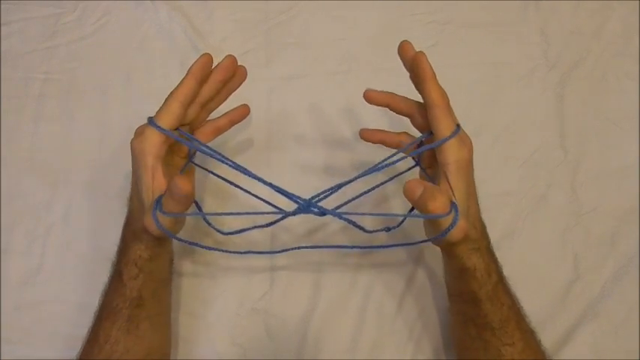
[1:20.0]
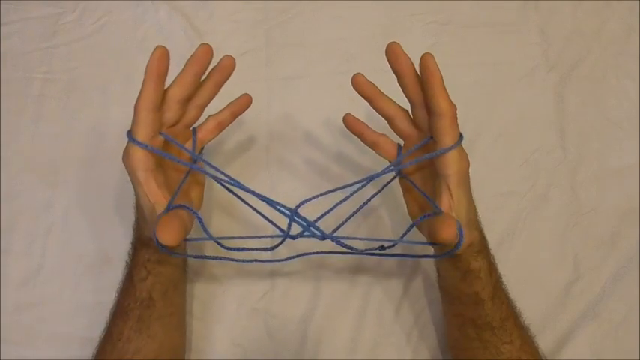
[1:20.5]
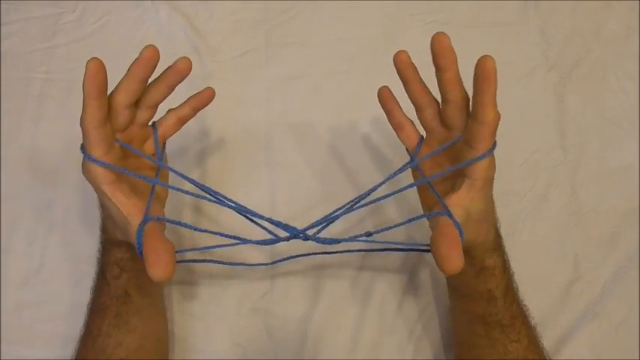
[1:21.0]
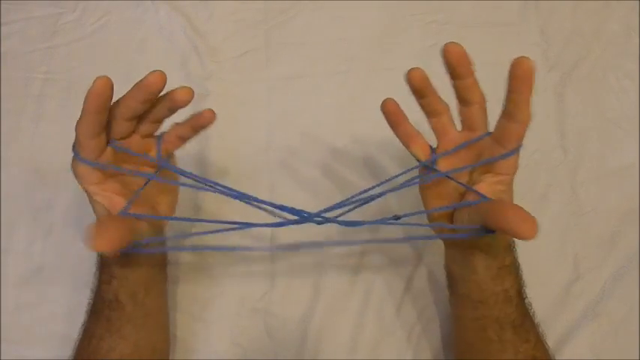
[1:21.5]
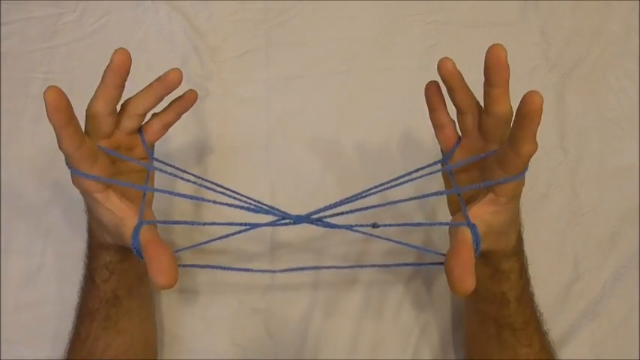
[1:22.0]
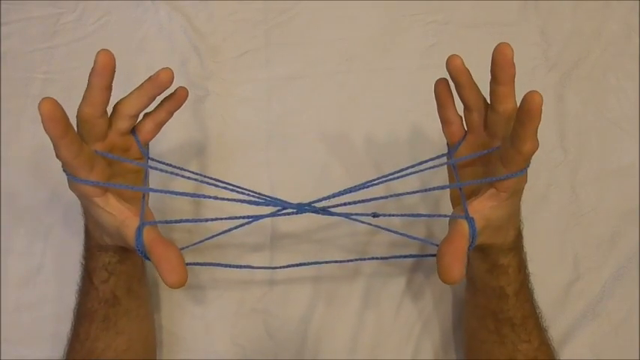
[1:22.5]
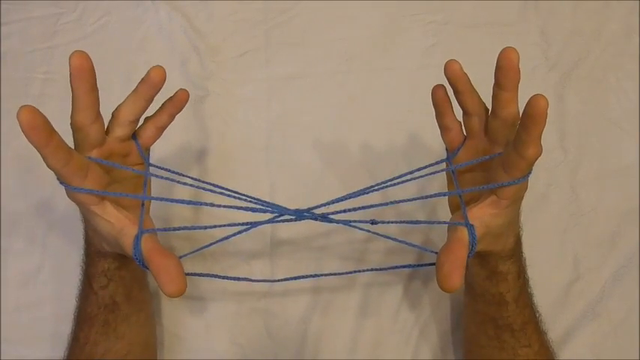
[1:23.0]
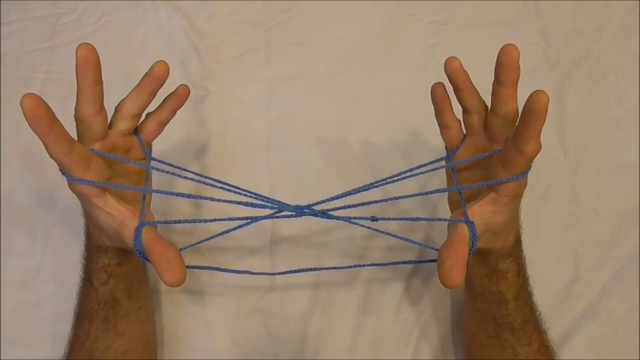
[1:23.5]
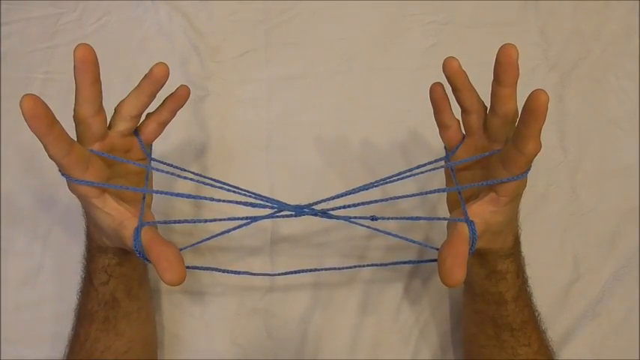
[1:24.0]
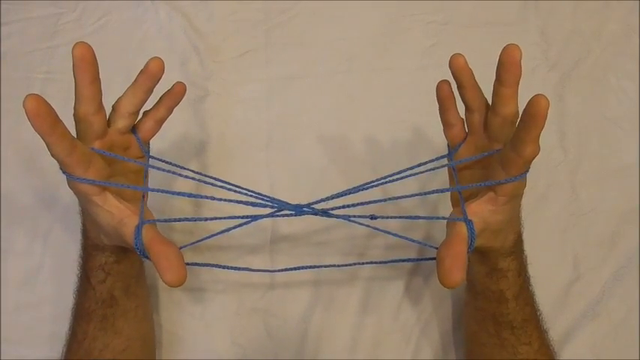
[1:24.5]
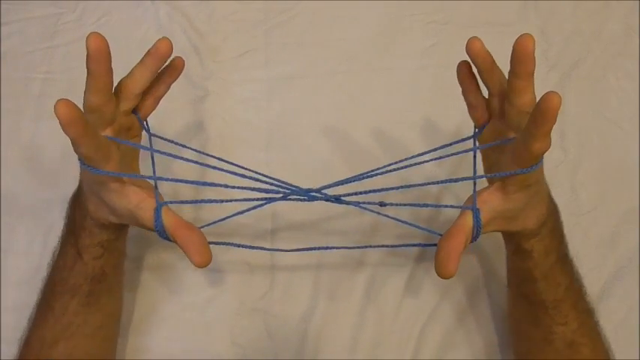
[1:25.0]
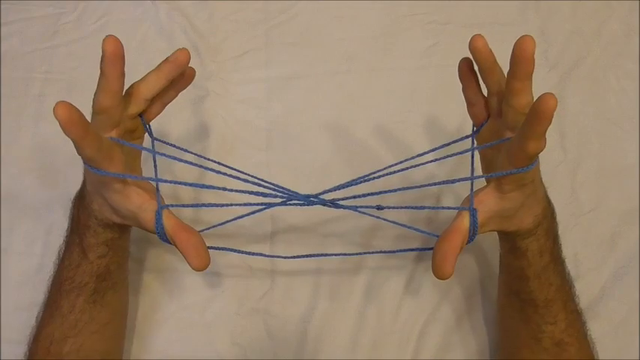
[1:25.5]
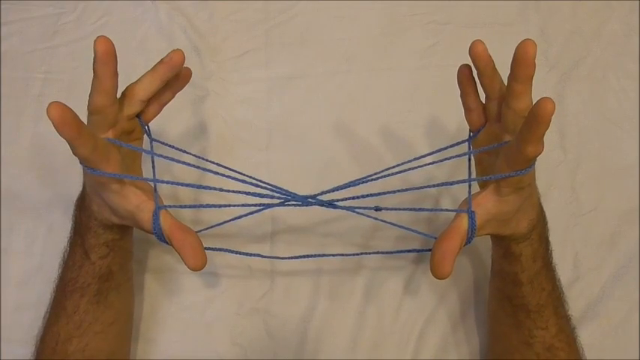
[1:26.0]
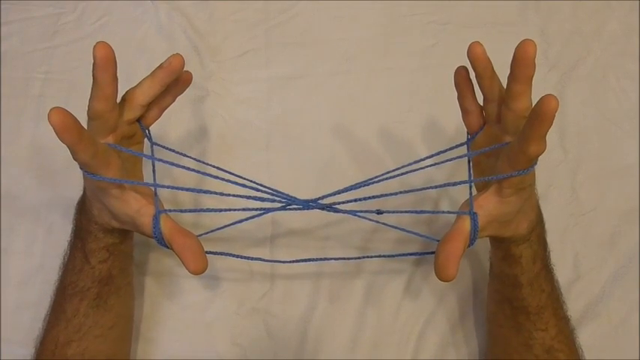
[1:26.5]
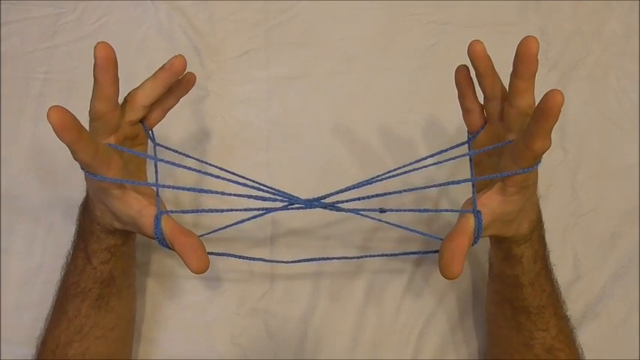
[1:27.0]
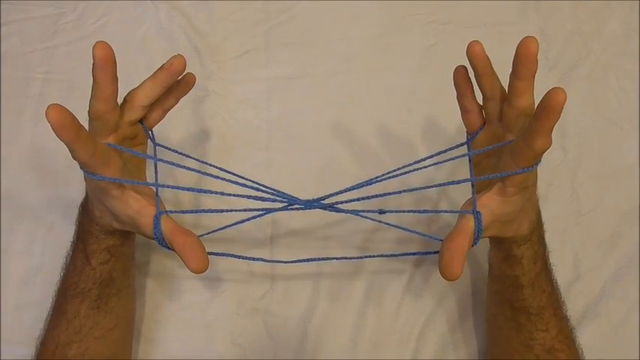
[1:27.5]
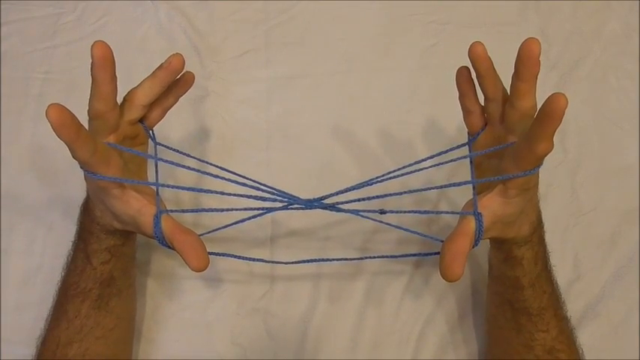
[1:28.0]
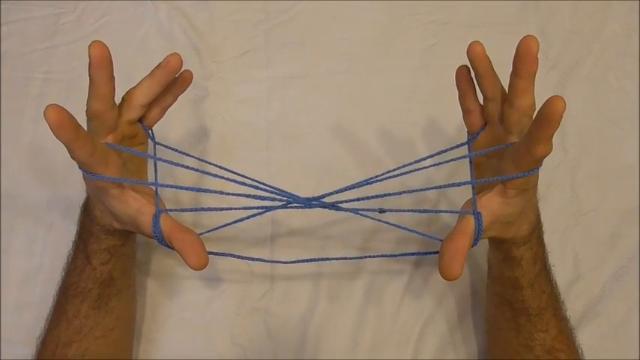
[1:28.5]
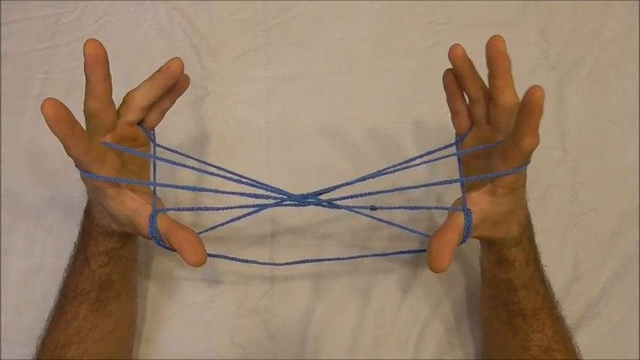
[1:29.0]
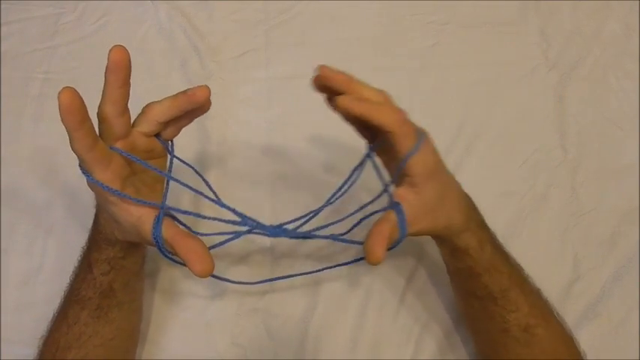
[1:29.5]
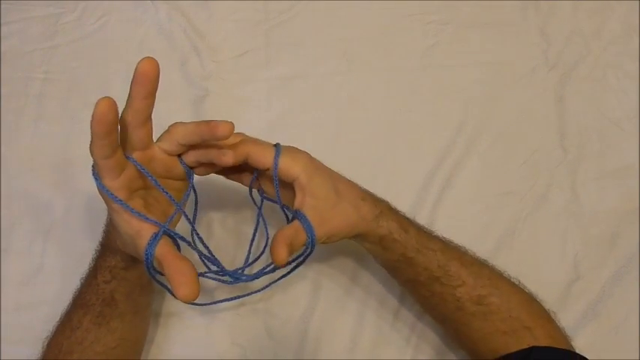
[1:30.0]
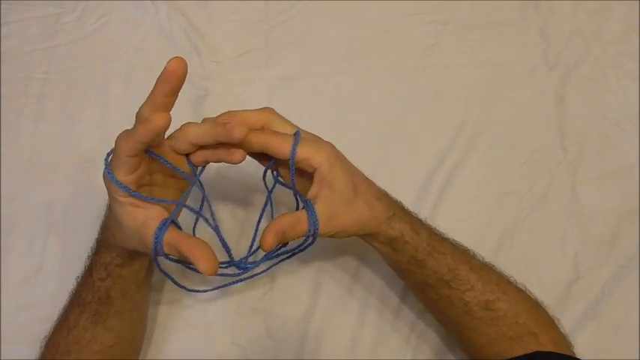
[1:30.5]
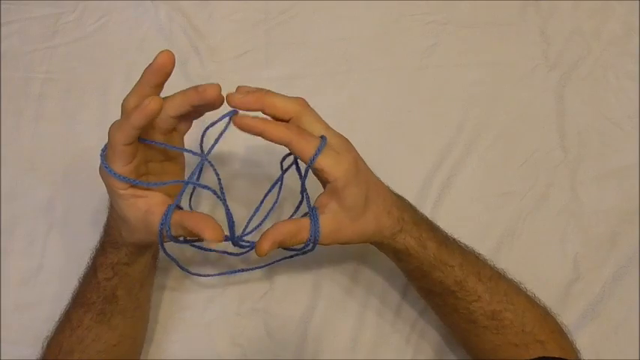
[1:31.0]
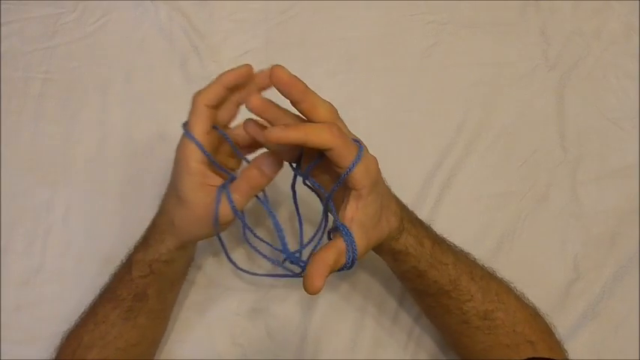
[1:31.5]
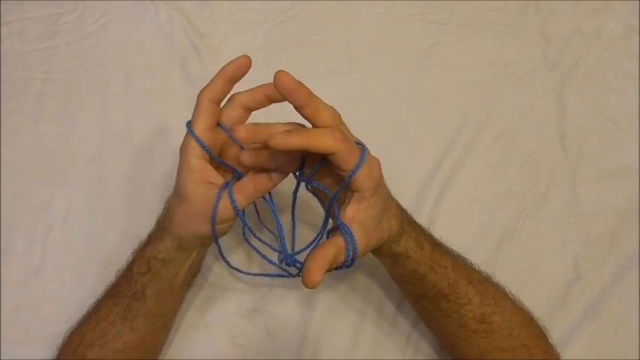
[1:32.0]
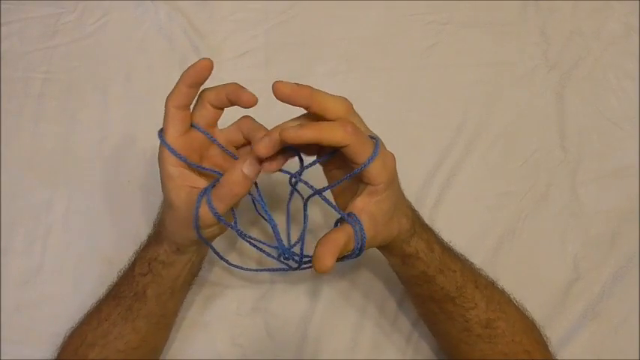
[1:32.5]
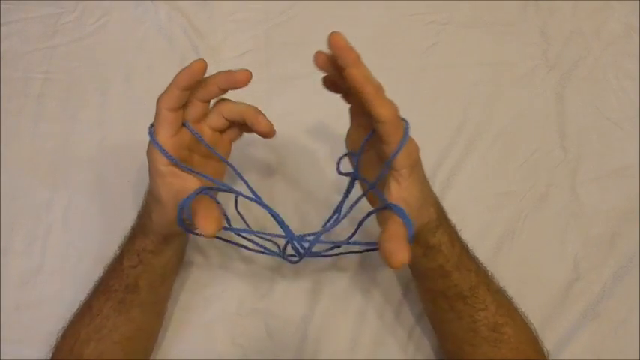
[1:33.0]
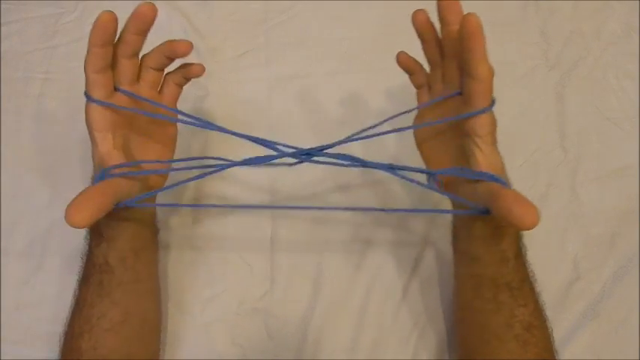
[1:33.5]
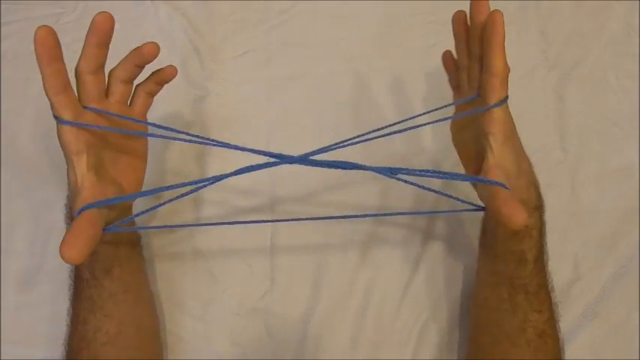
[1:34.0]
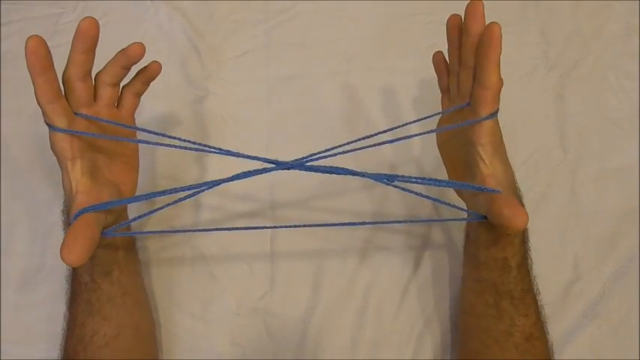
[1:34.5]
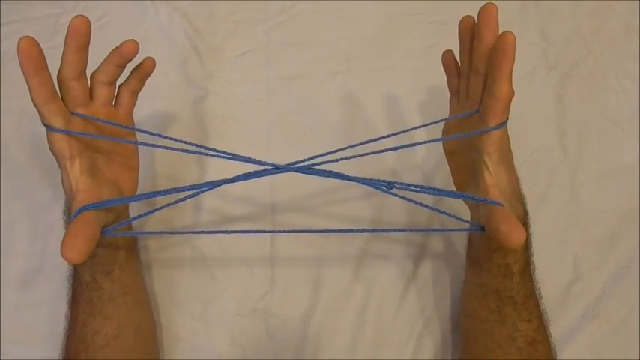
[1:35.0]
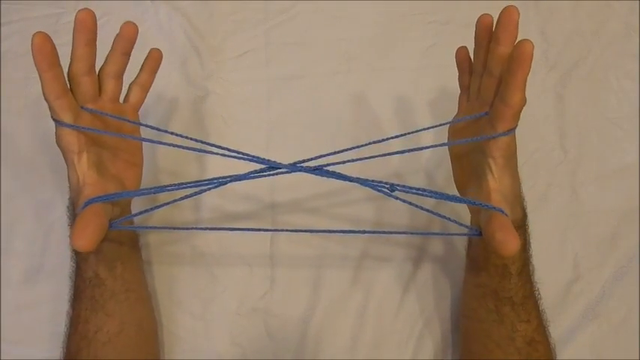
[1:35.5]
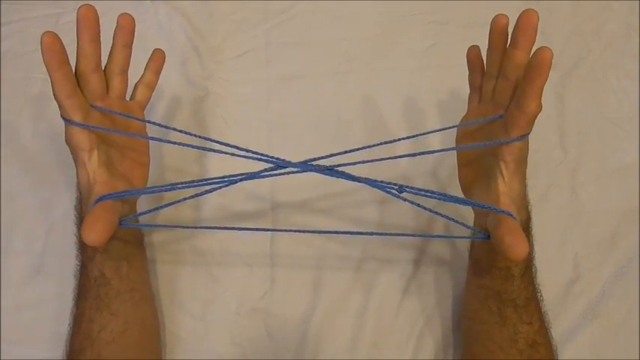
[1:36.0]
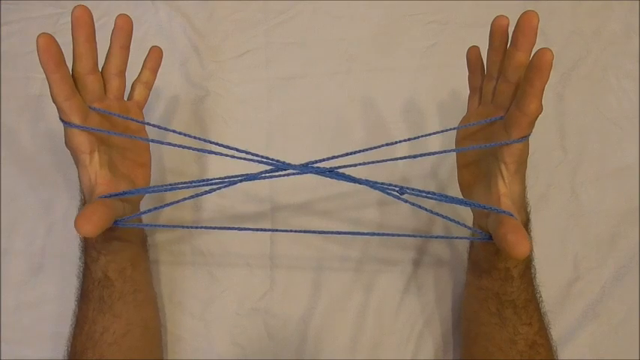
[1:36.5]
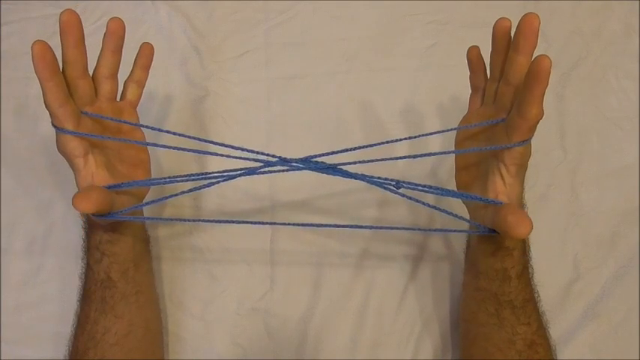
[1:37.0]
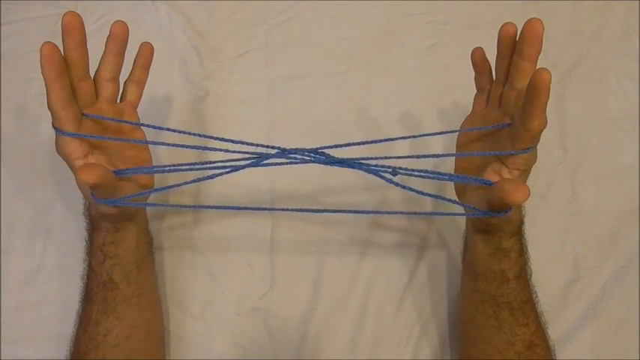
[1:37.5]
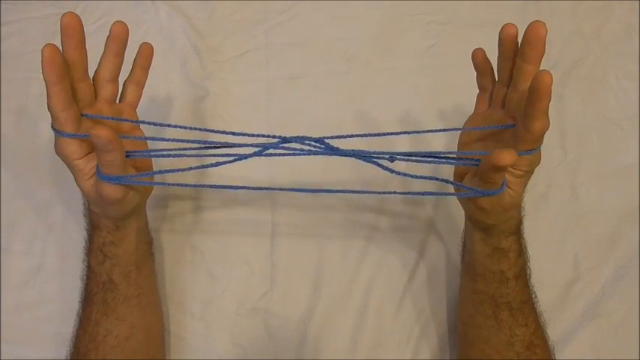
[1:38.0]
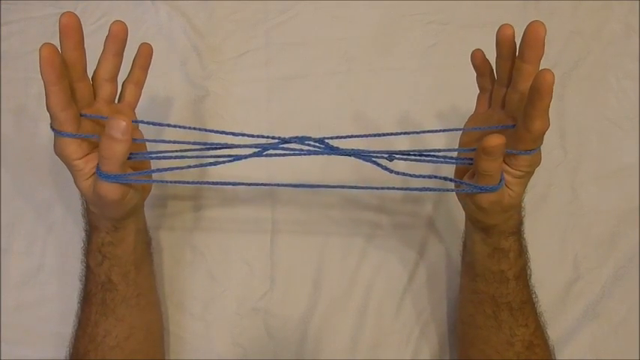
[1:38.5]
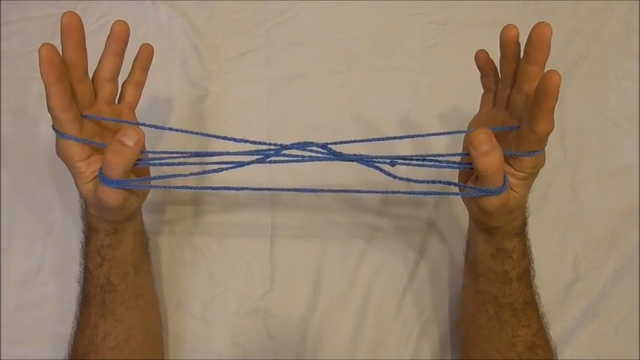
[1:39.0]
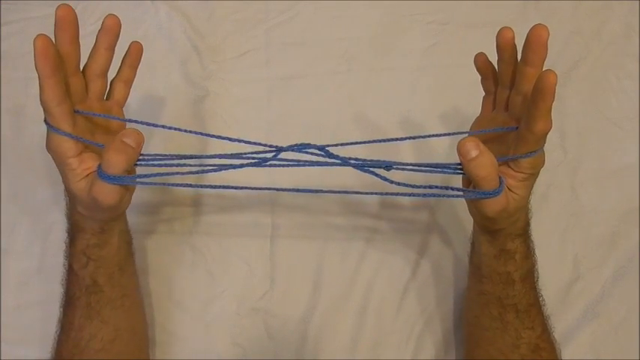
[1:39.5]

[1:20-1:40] Two white male hands, hairy on the forearms, hold what looks like a blue string shape, shaped into a complex fold. He appears to be tangling the strings from each finger to make a unique shape. His hands are fairly small to medium. A shadow reflects on the white vinyl, which seems to be a tablecloth placed on the table; it is not stretched smooth and has ripples. The strings are on all of his fingers, intertwined between them. The shape looks like two horizontal triangles facing each other with a line at the bottom, with lines visible within the triangles.